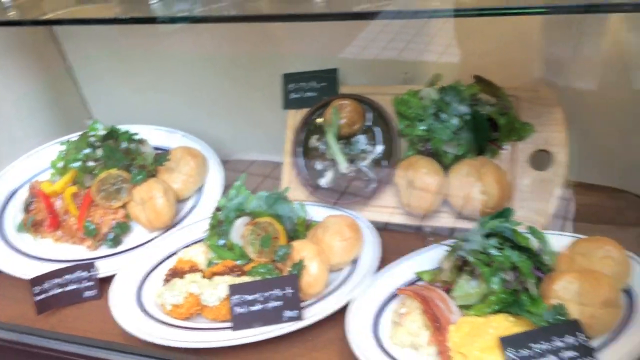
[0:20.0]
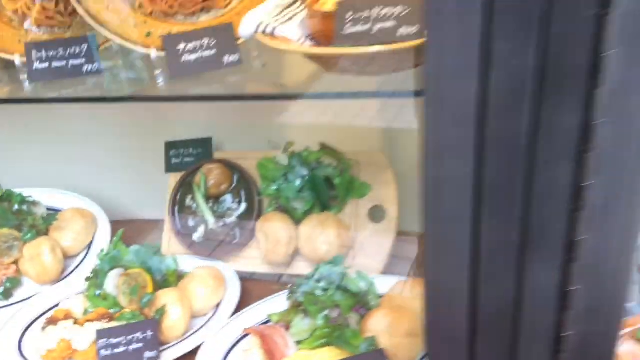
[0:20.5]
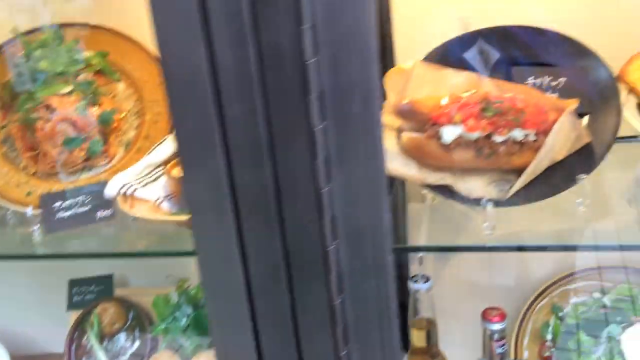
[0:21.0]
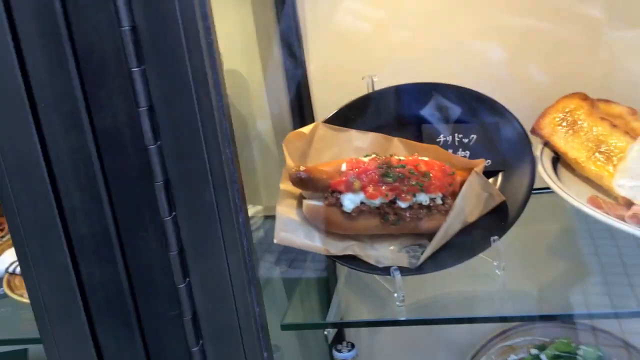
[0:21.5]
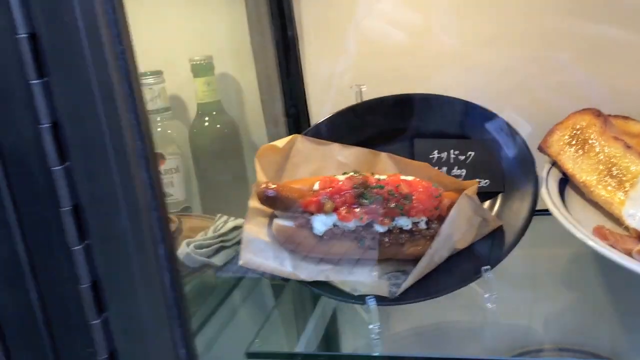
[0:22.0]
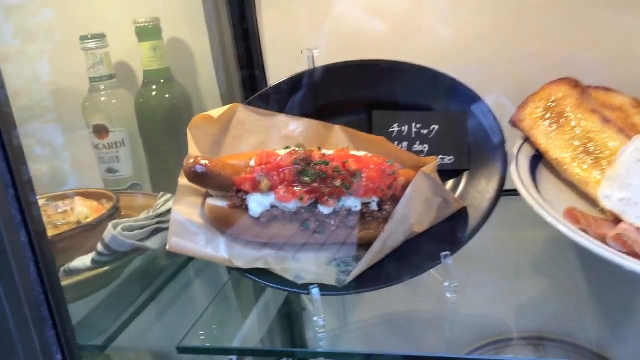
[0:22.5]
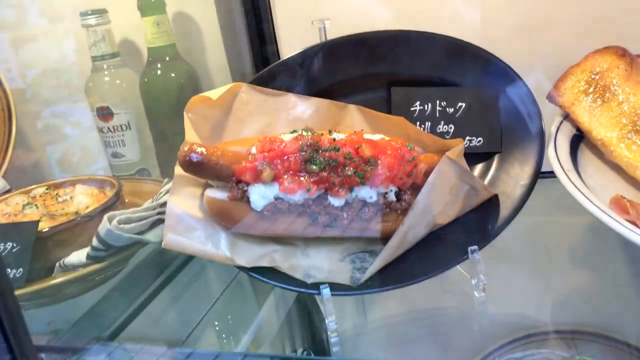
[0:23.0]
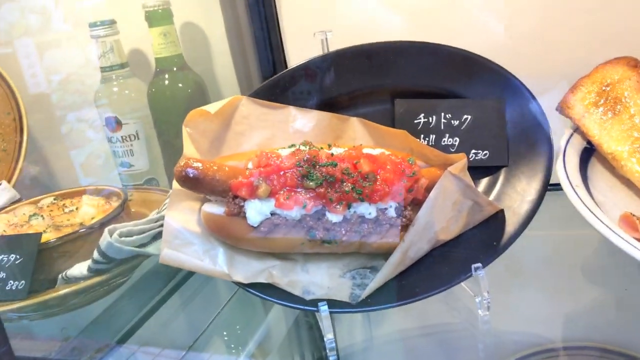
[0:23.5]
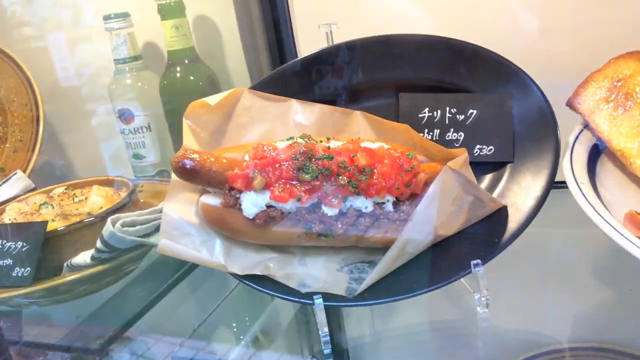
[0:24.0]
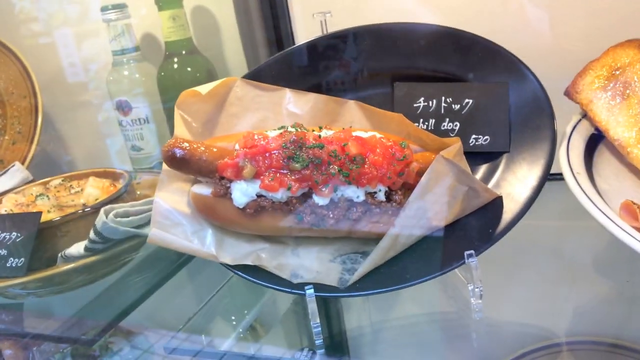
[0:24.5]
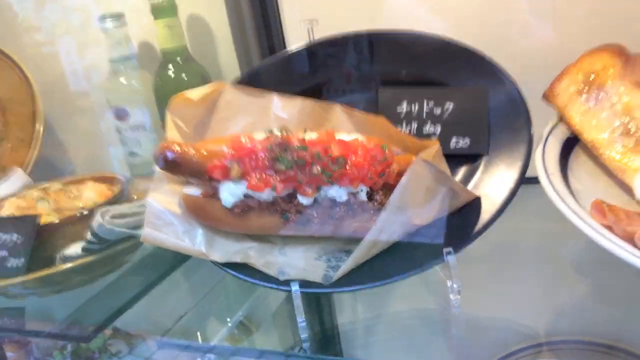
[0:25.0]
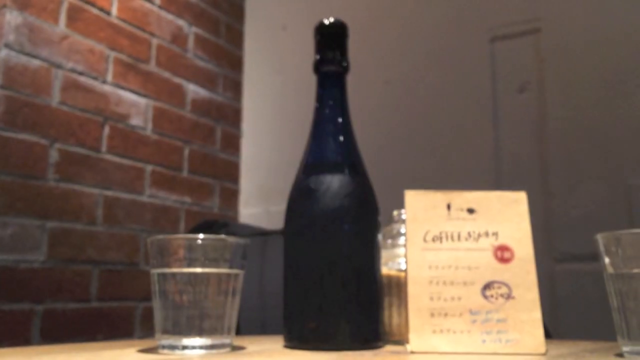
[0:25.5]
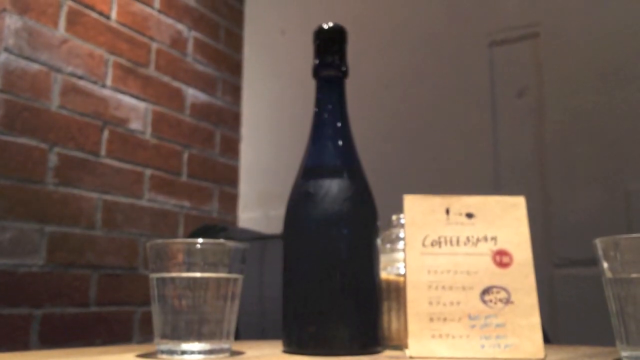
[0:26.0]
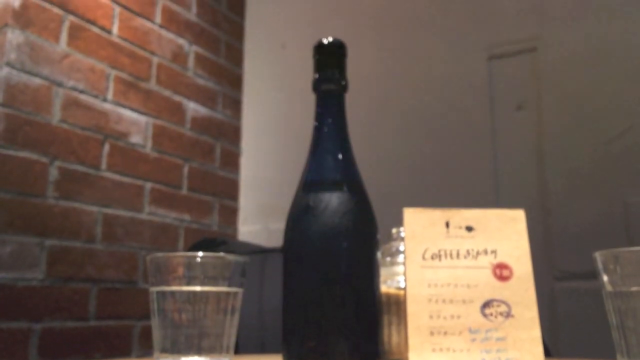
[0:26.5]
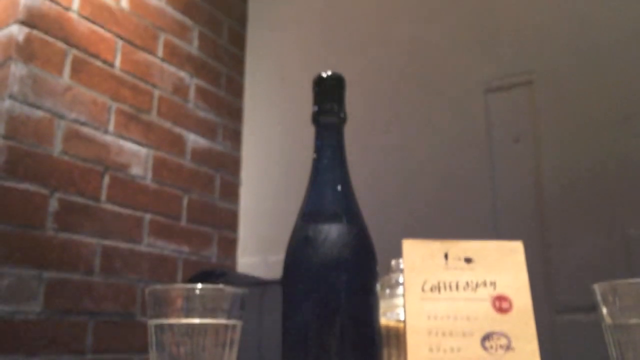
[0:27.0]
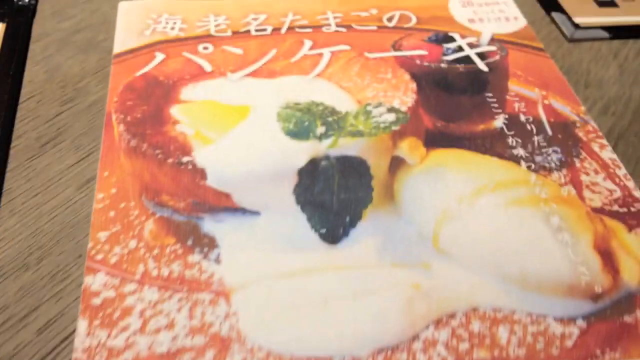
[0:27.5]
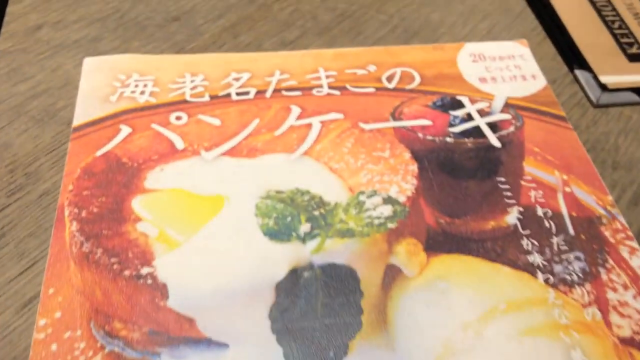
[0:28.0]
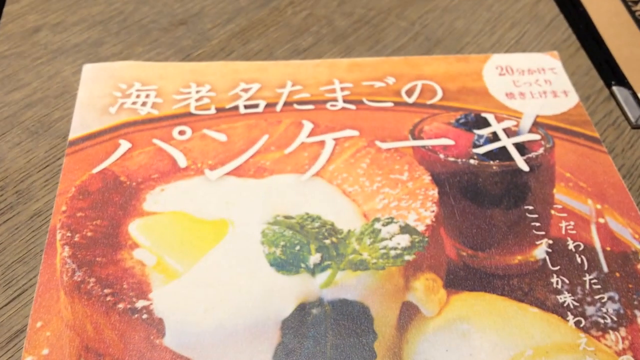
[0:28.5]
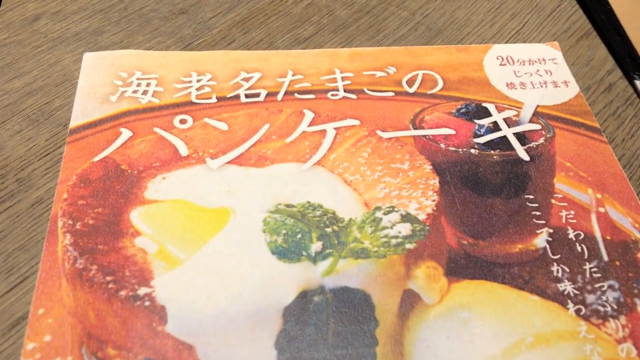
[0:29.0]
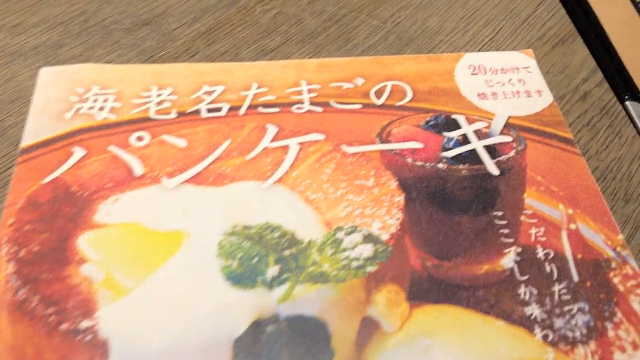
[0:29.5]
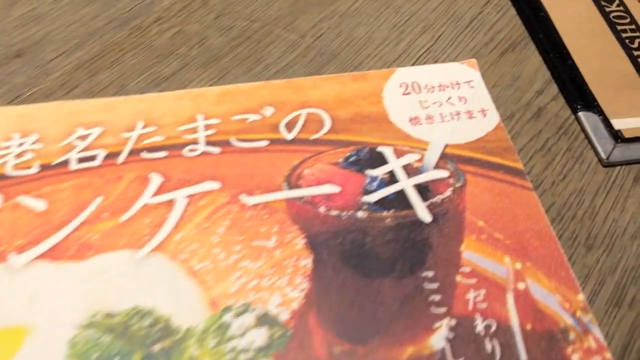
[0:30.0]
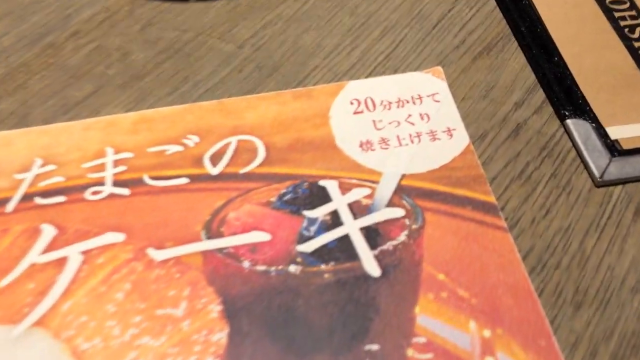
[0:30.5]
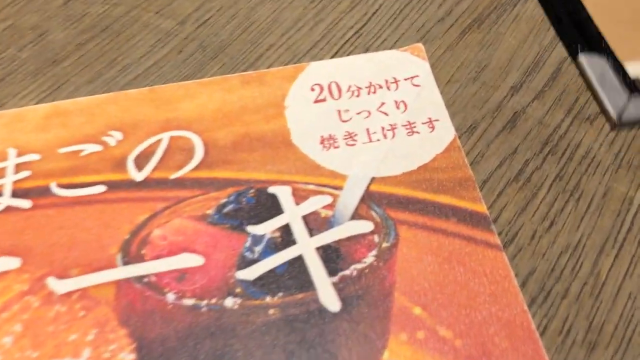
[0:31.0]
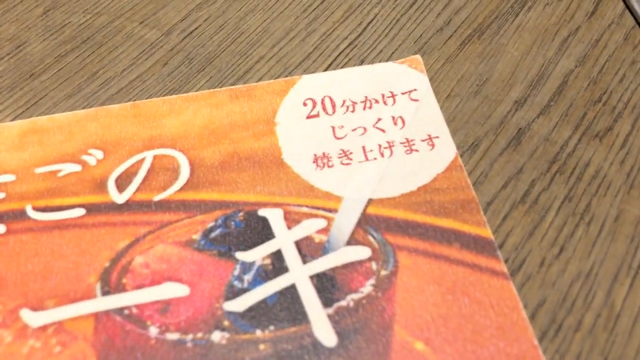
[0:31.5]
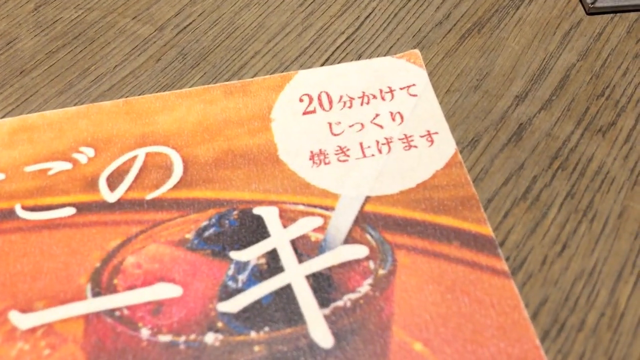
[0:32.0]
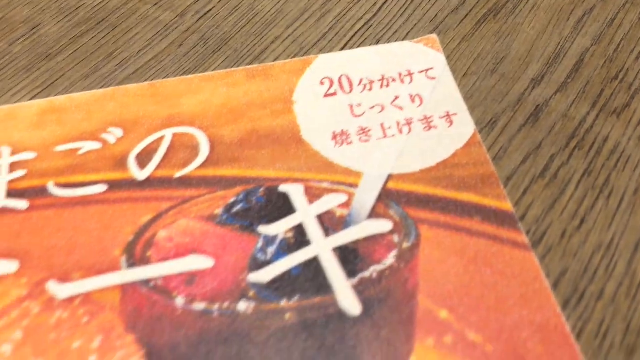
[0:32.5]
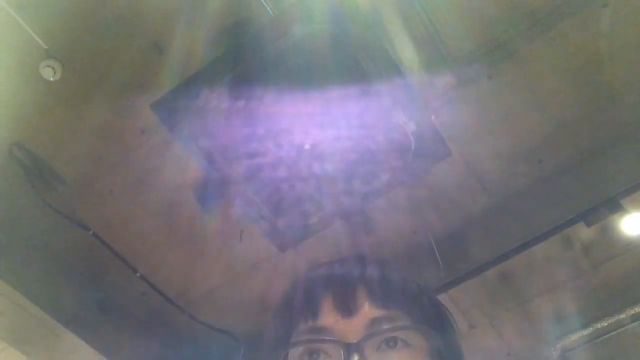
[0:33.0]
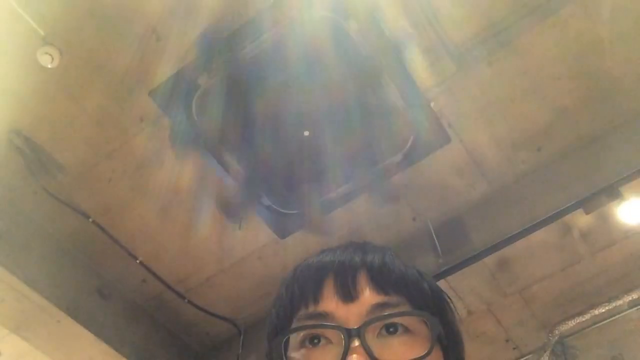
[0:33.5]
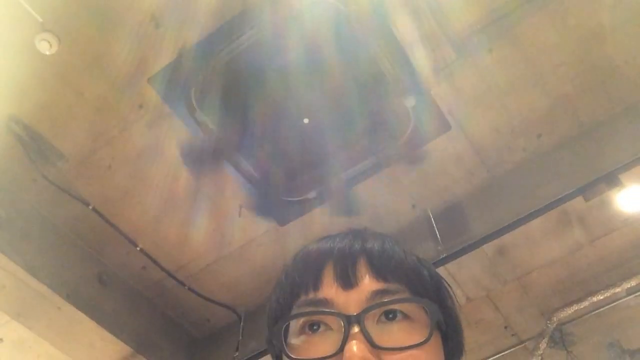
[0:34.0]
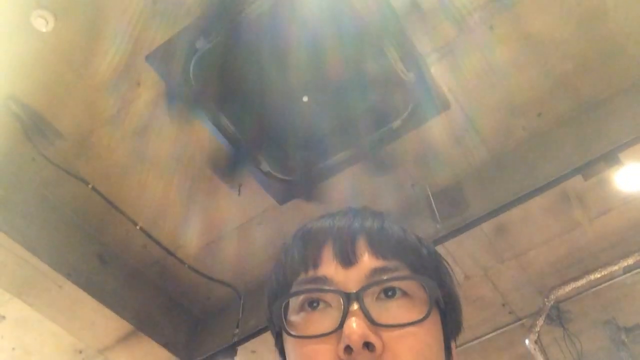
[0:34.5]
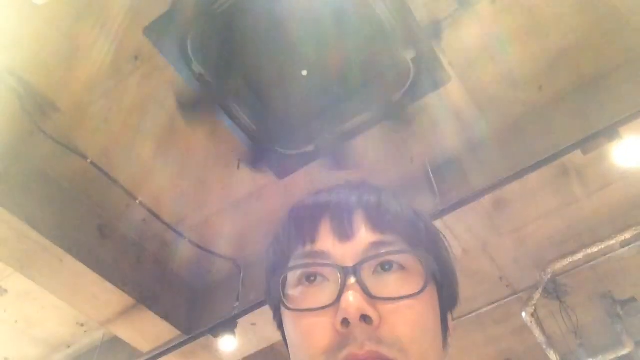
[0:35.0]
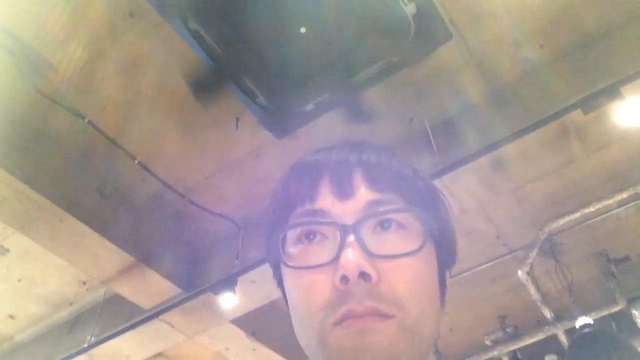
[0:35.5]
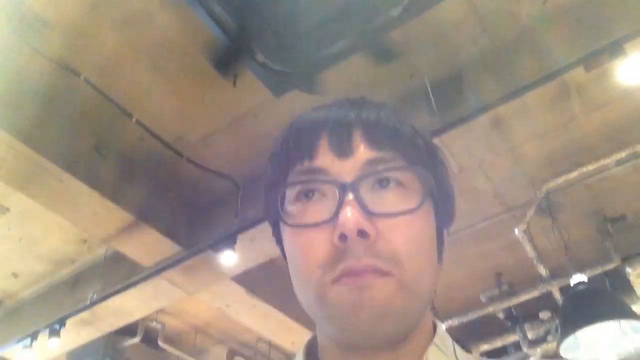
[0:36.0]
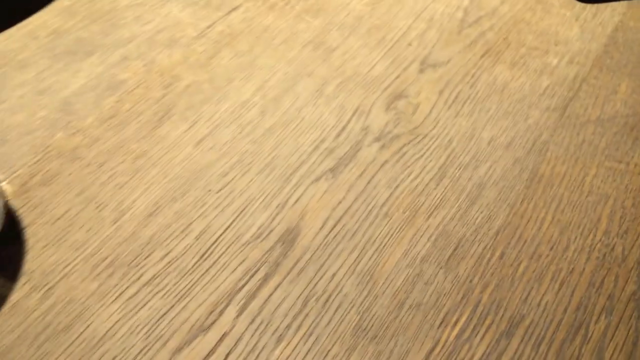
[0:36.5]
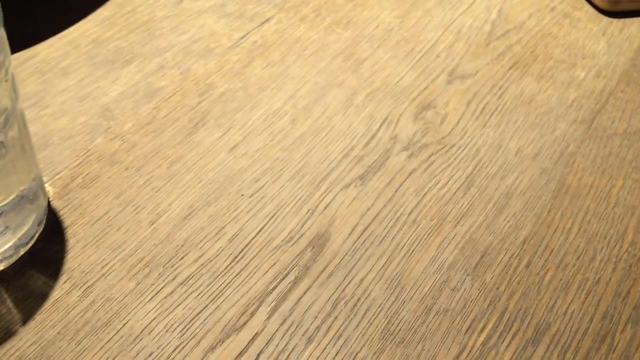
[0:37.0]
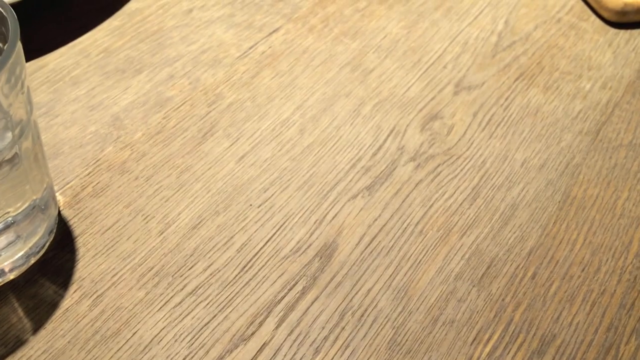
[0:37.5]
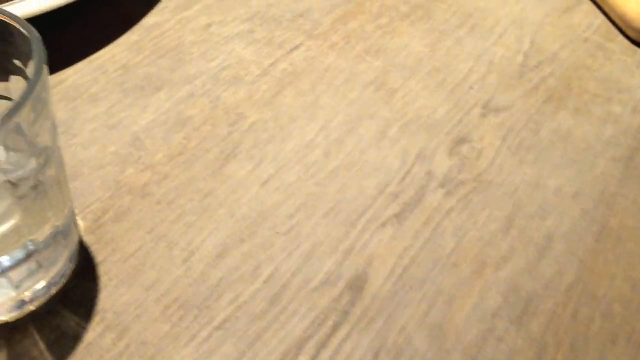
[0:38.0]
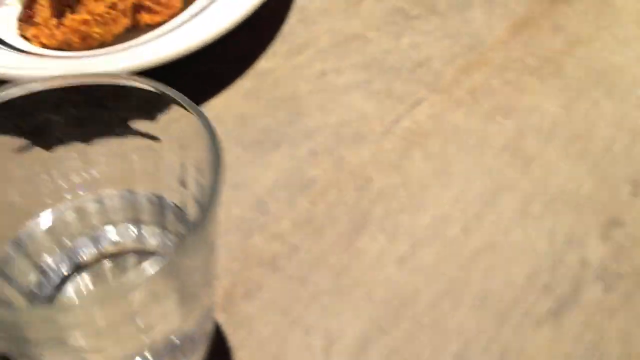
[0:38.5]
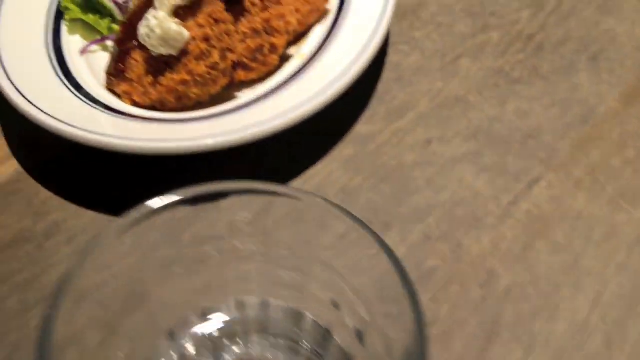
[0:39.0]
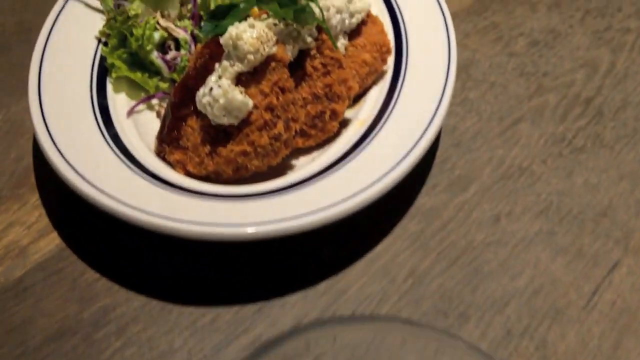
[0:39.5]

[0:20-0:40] A shot of the restaurant's exterior shows its window display of the various dishes on the menu. The scene alternates between the man in selfie mode and what he sees from his perspective. The meals are shown with small black index cards giving the price of each item along with some kind of description in foreign text, written in silver. The foods look realistic, but the way they are positioned makes it clear they are meant for display. The main menu item is a version of a hot dog with sauce on top. The scene then changes to an interior shot of the man looking at the menu, followed by another pan up and down his face.